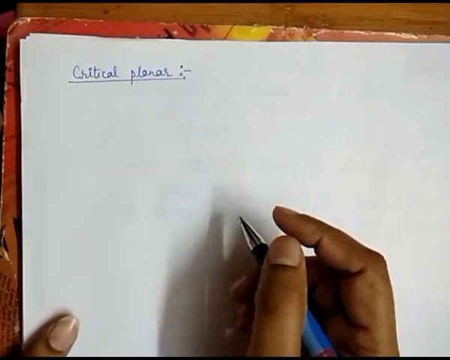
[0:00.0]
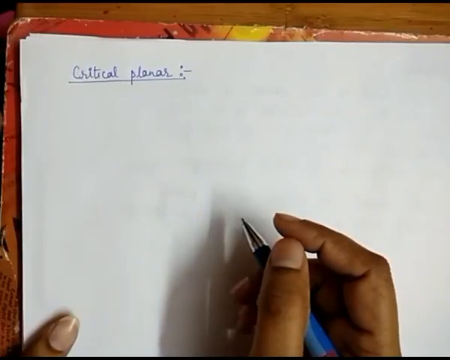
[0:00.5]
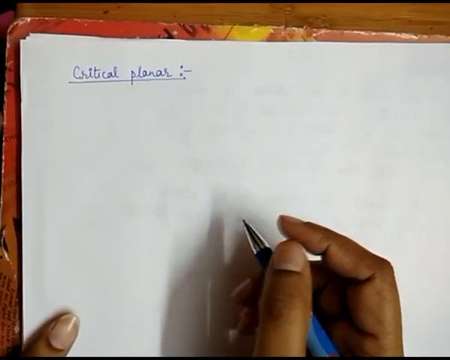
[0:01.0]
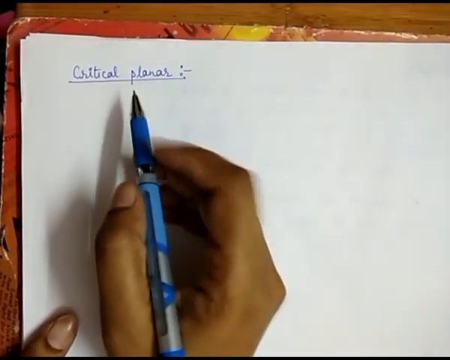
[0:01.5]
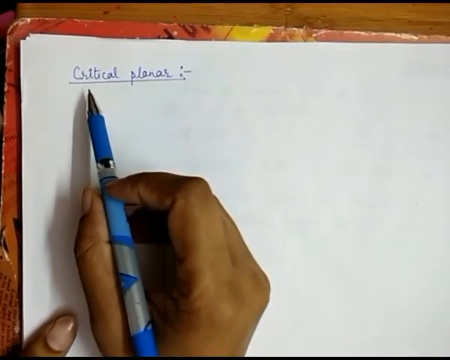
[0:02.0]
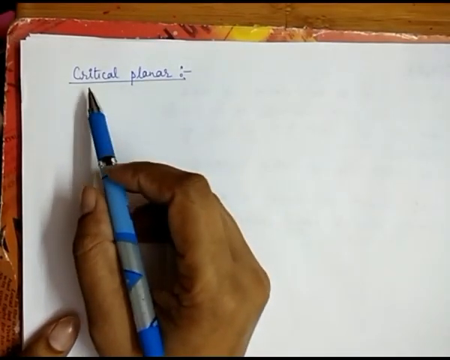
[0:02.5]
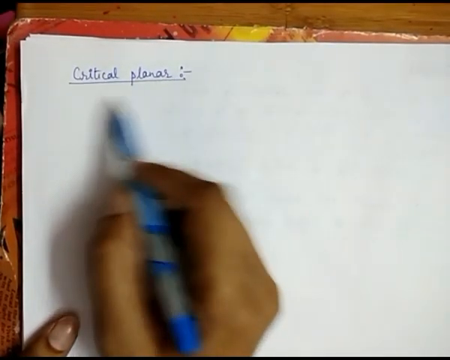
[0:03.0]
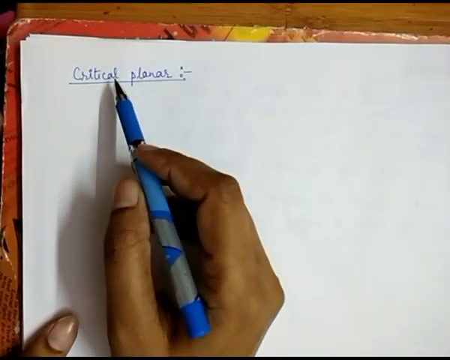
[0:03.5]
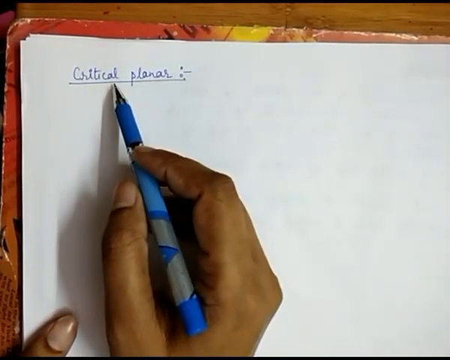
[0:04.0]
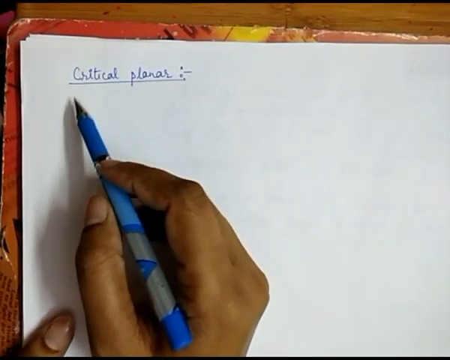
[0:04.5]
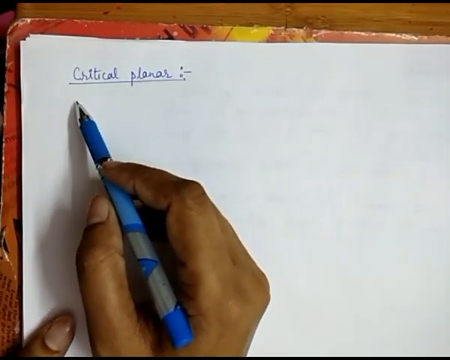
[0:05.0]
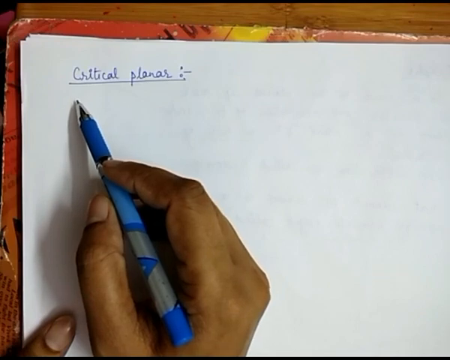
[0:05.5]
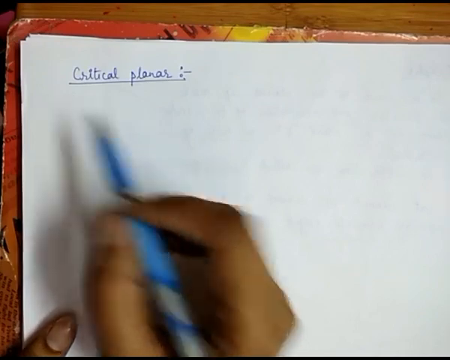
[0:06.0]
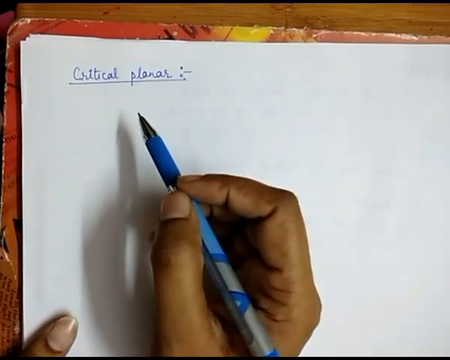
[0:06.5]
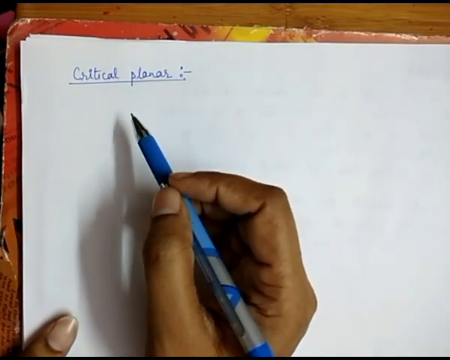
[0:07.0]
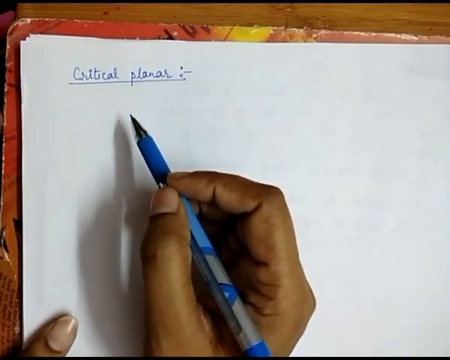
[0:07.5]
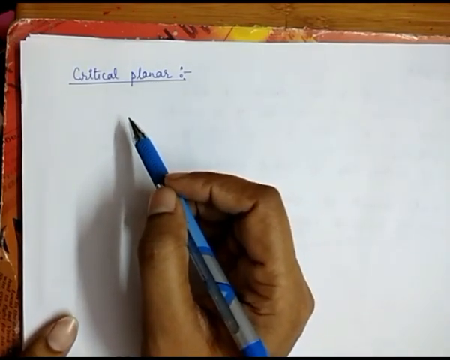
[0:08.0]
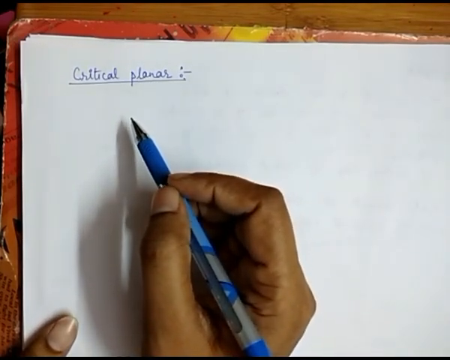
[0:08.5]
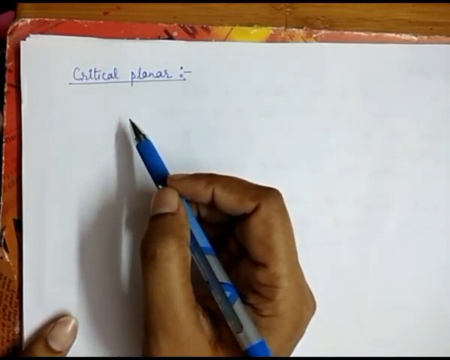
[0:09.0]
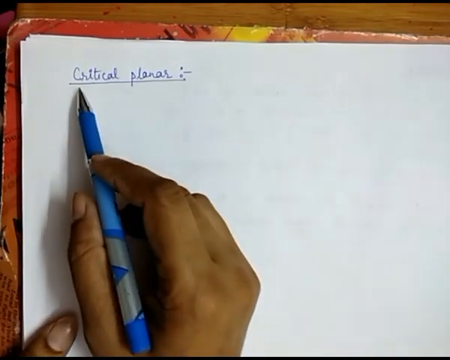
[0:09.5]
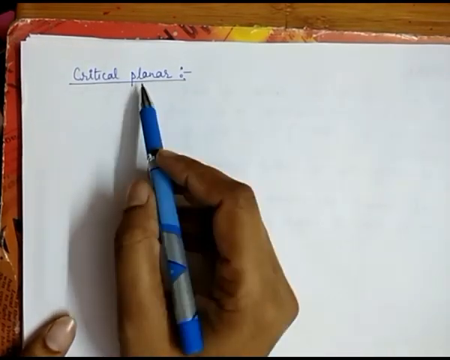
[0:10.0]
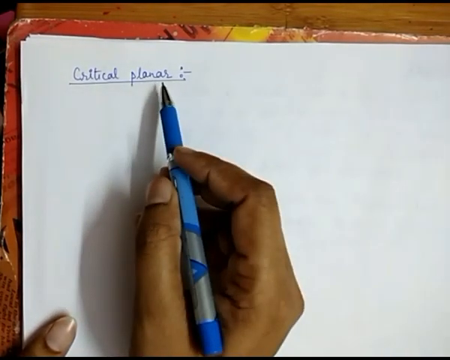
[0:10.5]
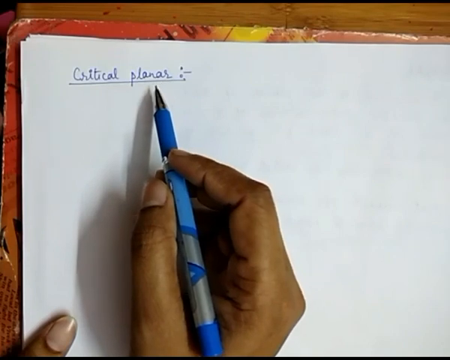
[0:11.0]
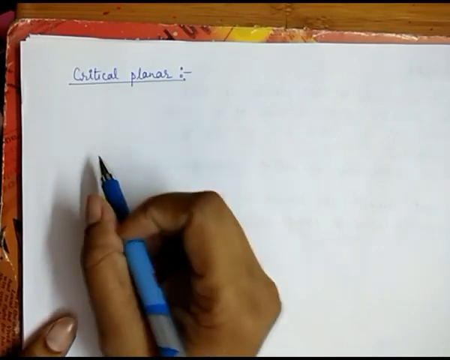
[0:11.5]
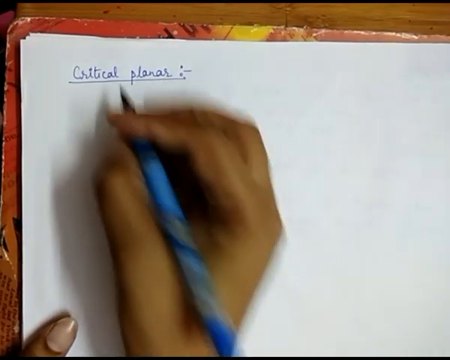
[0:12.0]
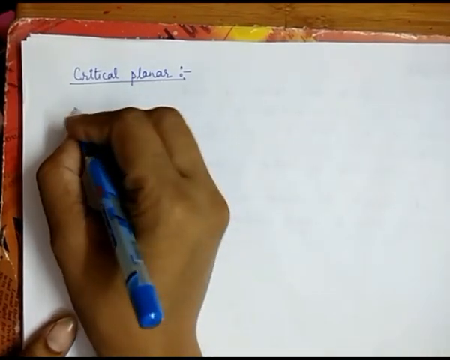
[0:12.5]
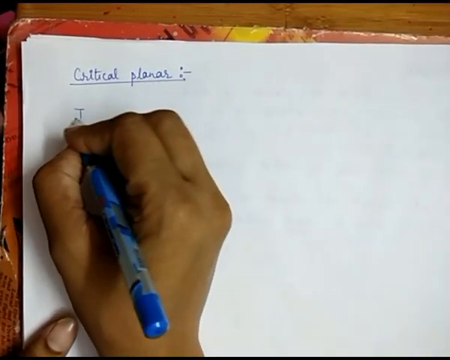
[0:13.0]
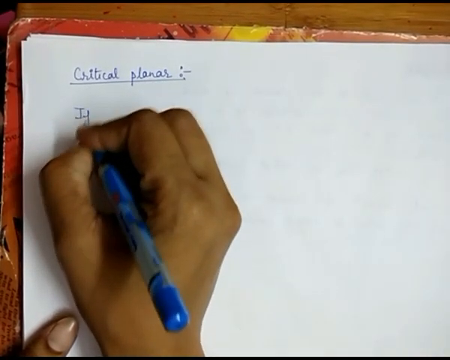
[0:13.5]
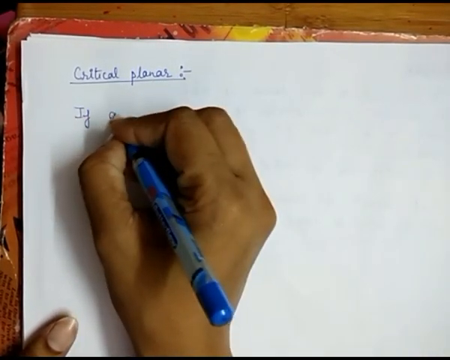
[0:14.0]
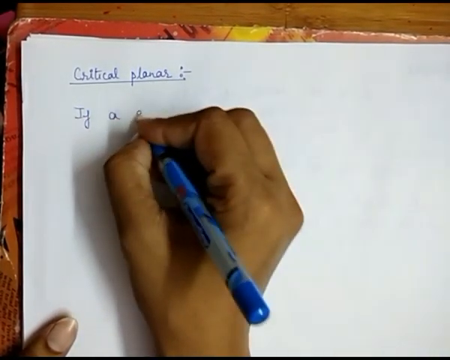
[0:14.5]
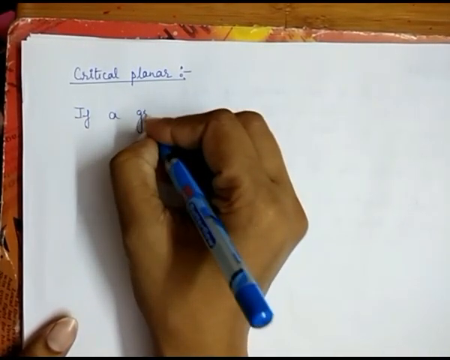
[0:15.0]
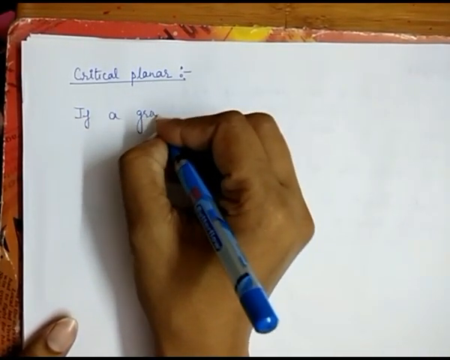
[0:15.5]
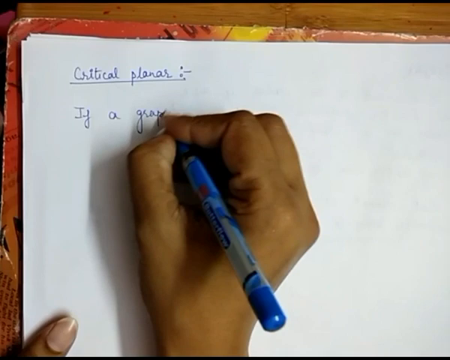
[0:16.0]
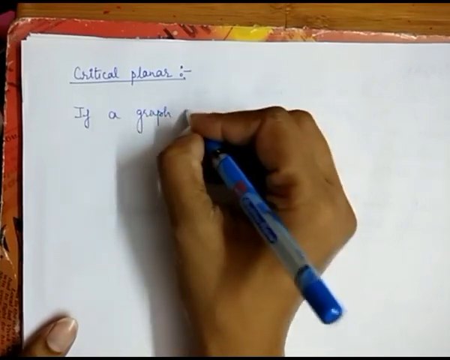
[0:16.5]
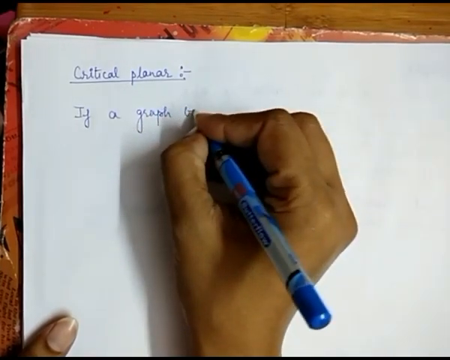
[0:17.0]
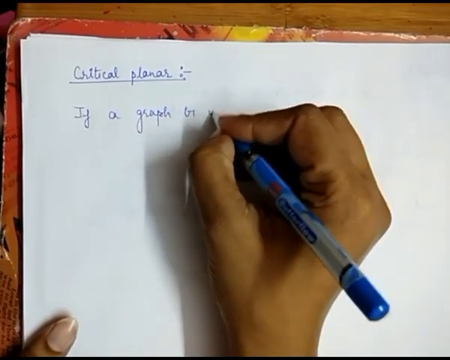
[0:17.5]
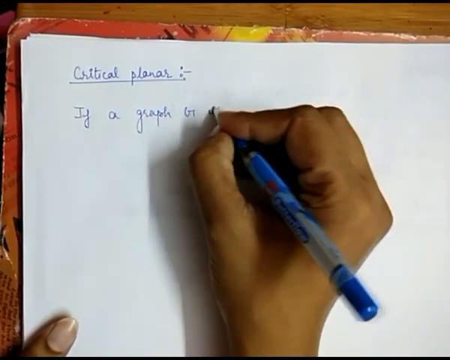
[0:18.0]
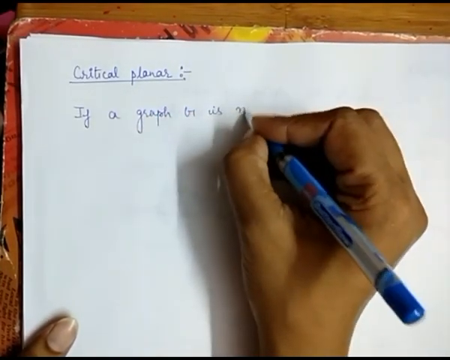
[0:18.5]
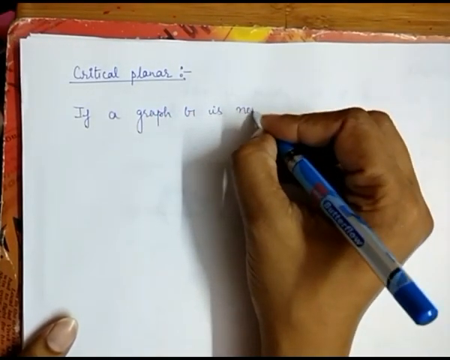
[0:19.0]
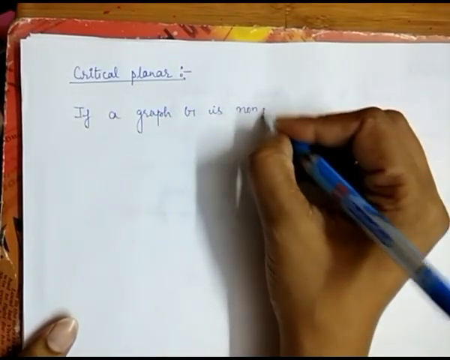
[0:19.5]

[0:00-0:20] The scene is an older wooden table with an orange stain, of which only the very top edge is visible. On the table is an orange, red and yellow mat; its left-hand side and part of its top are visible. On the mat is a piece of white writing paper with a tiny tear in the upper left-hand corner. A woman's hand with darker tanned skin holds a blue and gray pen. Across the top of the paper, in blue ink and neat cursive handwriting, are the words "Critical planner", underlined. She points the pen at the words, then adjusts the pen as if she may be speaking and explaining something, and taps under the word "Critical" and then under "Planner". The thumbnail of her left hand is visible in the lower left-hand corner. She begins to write "If a graph is".